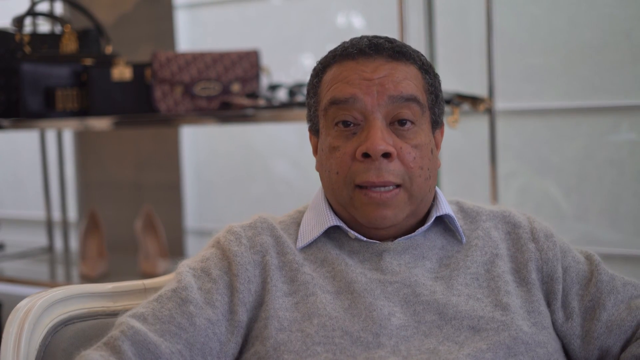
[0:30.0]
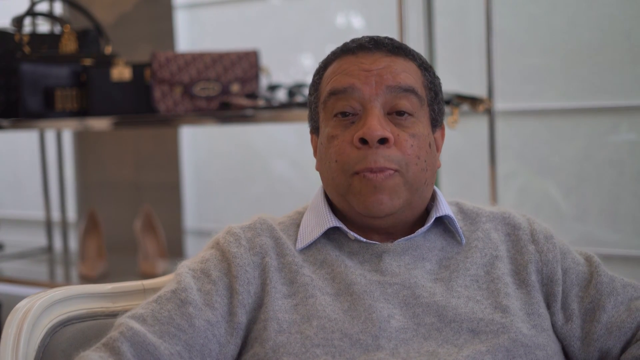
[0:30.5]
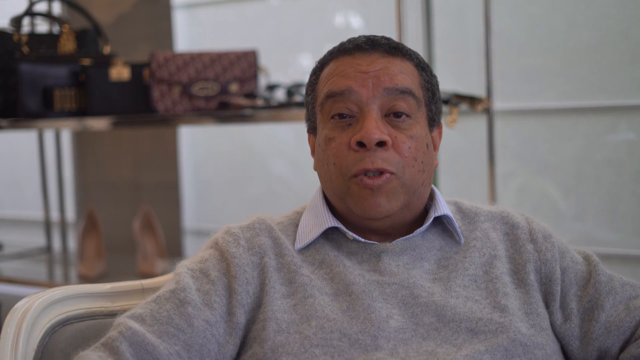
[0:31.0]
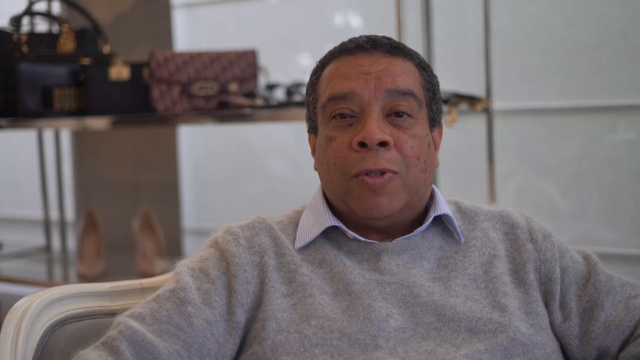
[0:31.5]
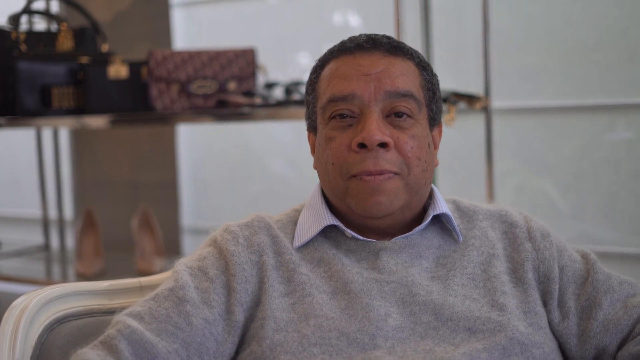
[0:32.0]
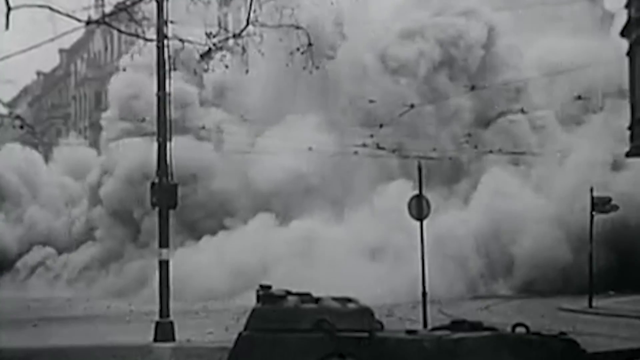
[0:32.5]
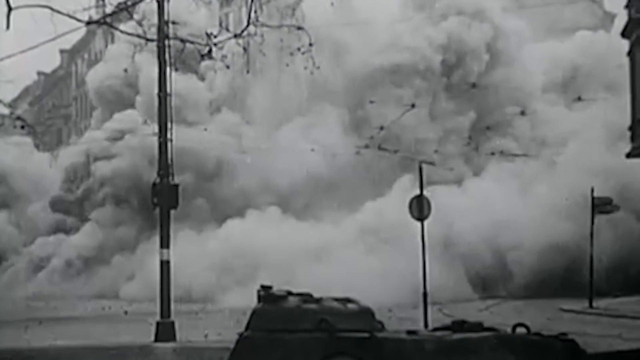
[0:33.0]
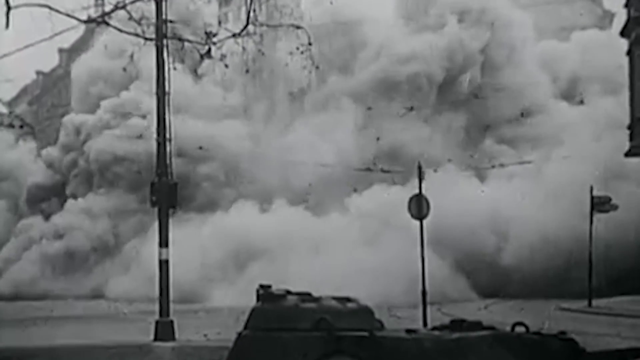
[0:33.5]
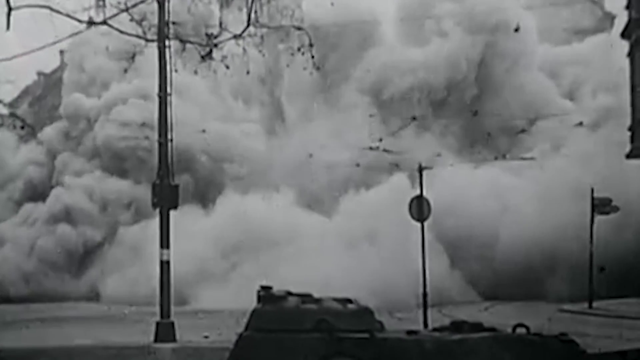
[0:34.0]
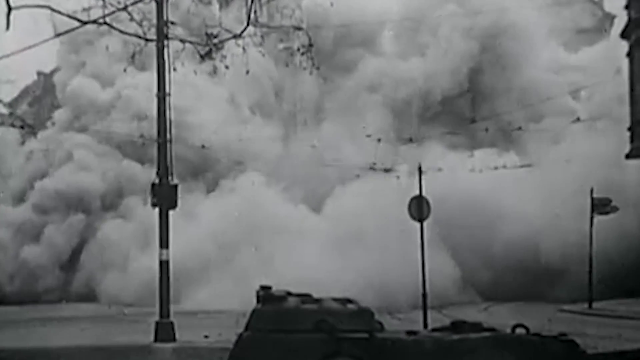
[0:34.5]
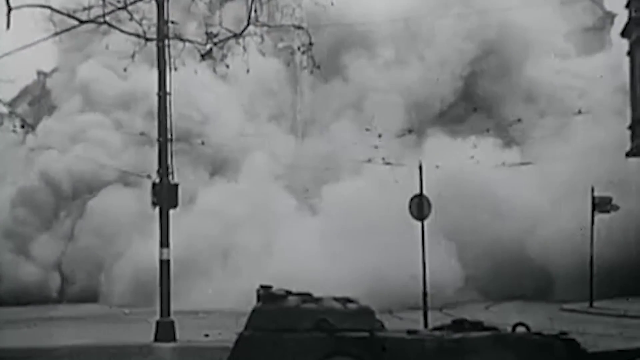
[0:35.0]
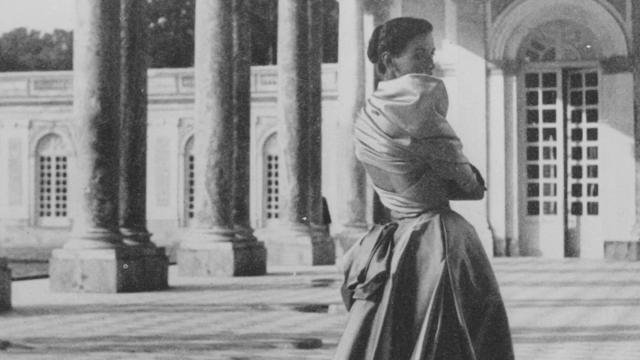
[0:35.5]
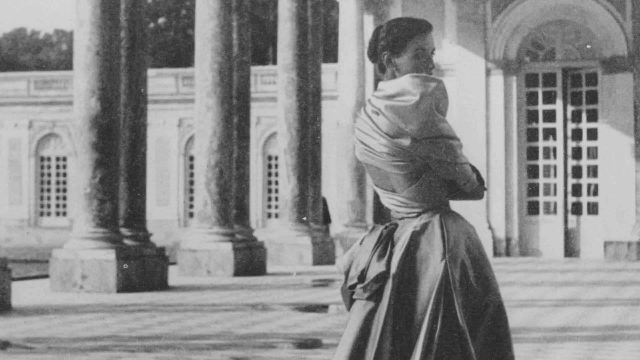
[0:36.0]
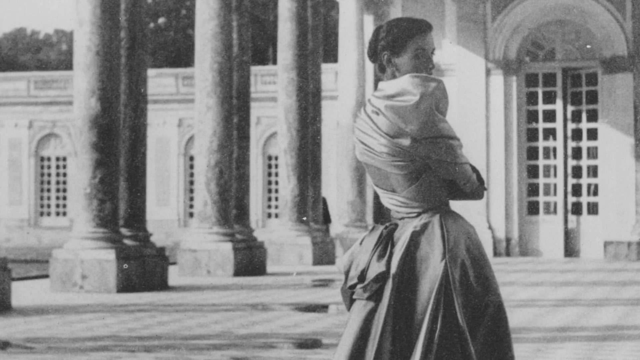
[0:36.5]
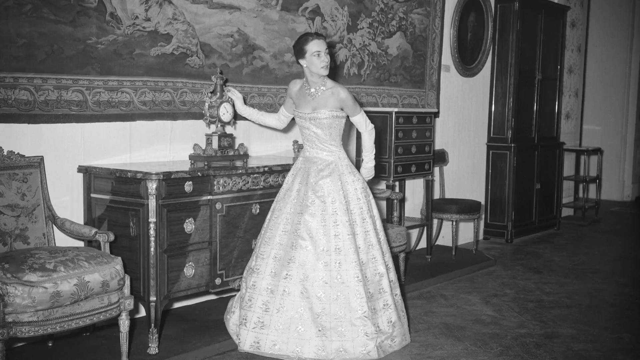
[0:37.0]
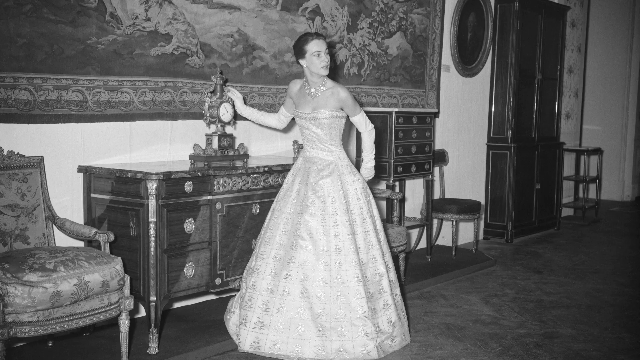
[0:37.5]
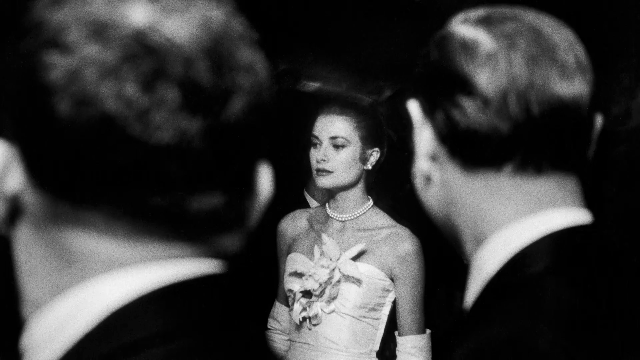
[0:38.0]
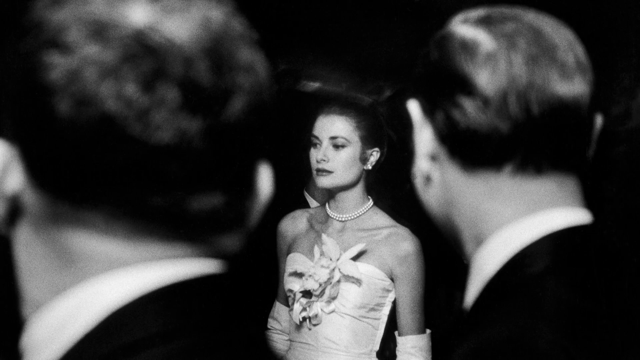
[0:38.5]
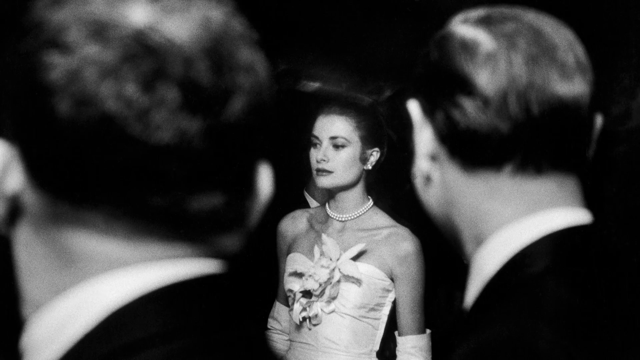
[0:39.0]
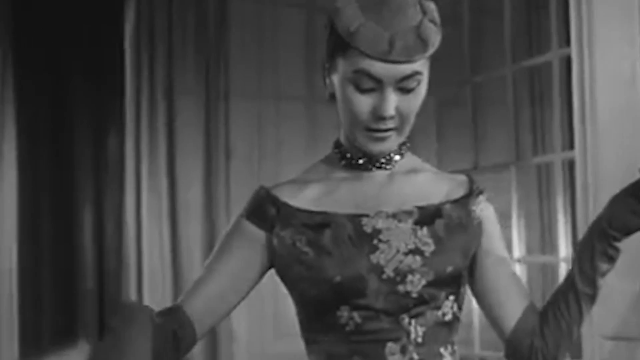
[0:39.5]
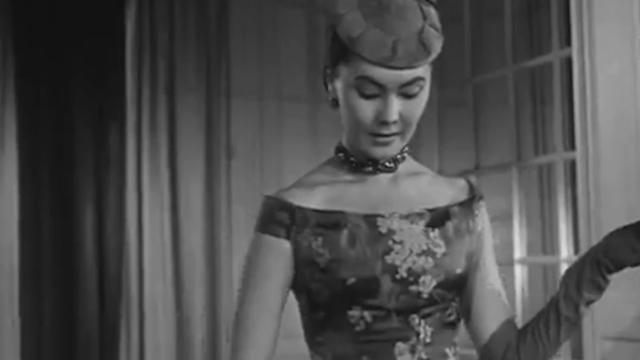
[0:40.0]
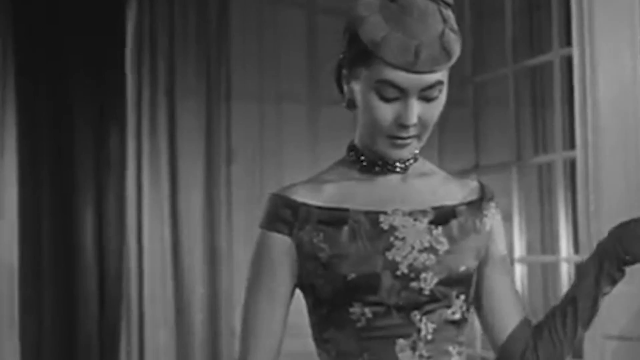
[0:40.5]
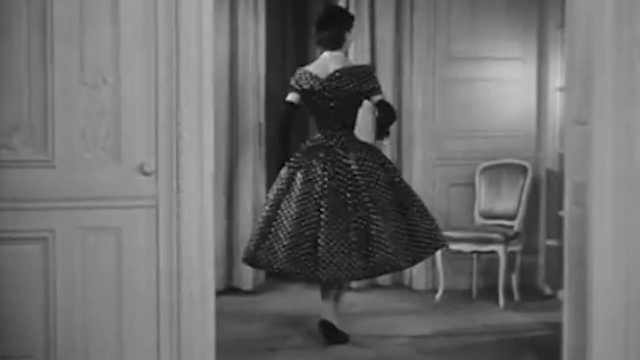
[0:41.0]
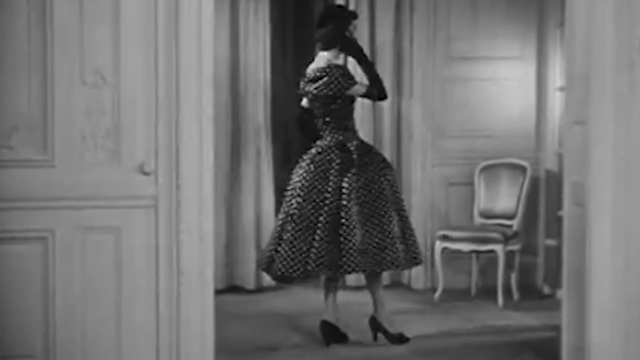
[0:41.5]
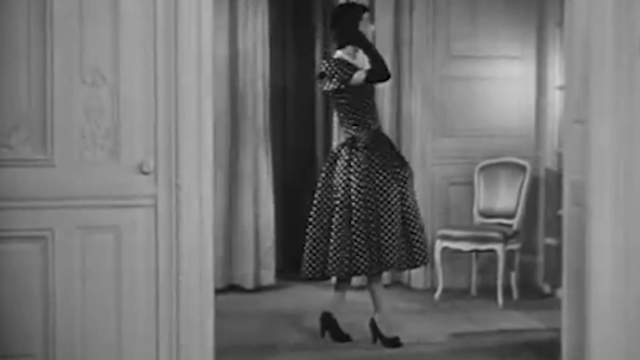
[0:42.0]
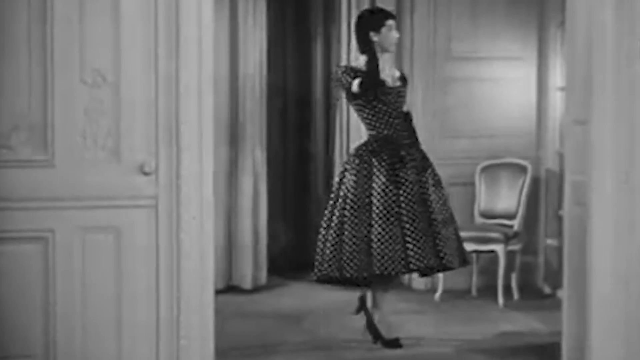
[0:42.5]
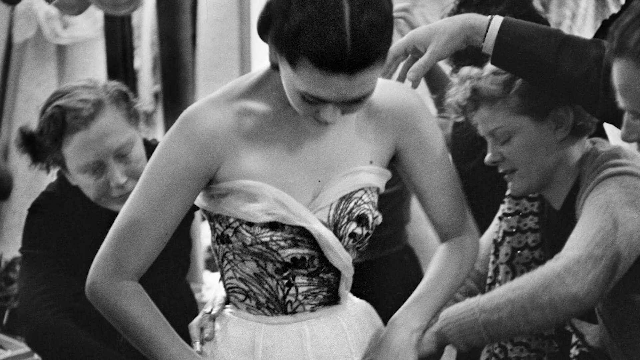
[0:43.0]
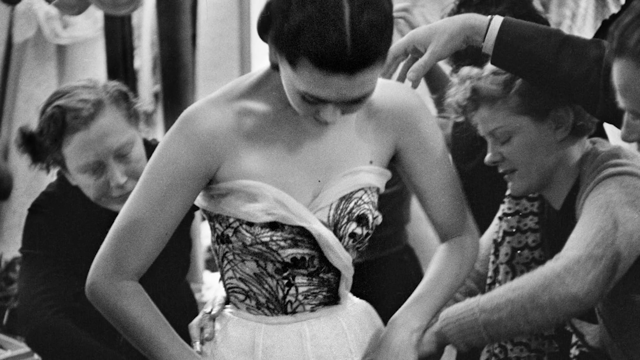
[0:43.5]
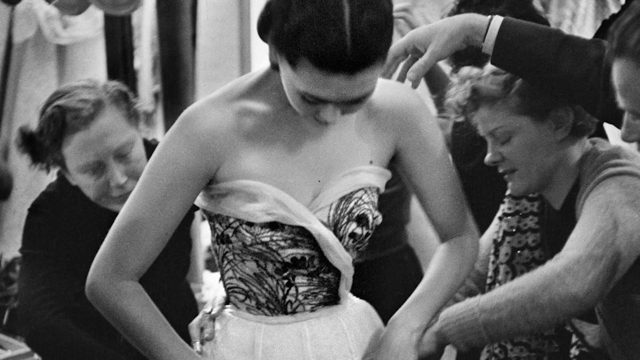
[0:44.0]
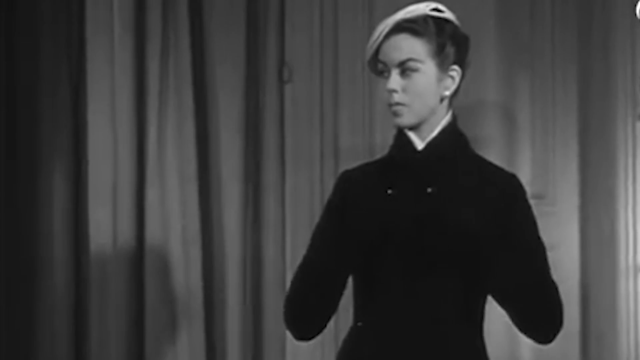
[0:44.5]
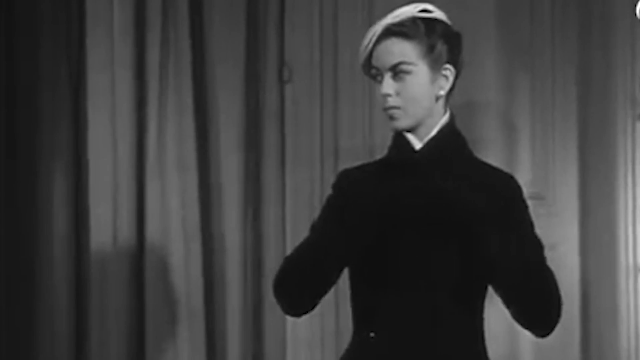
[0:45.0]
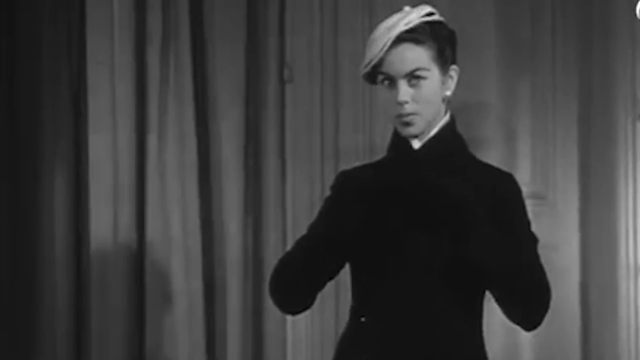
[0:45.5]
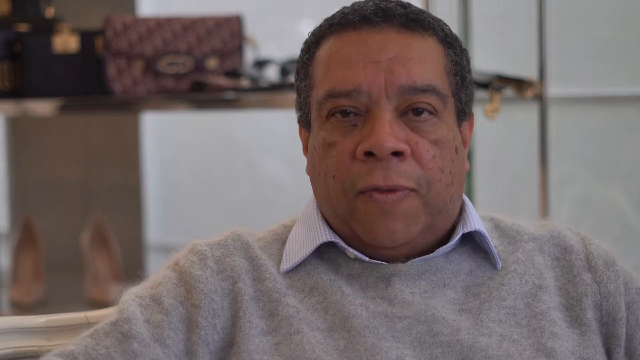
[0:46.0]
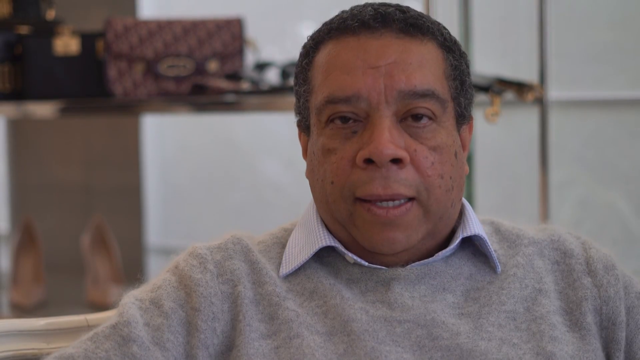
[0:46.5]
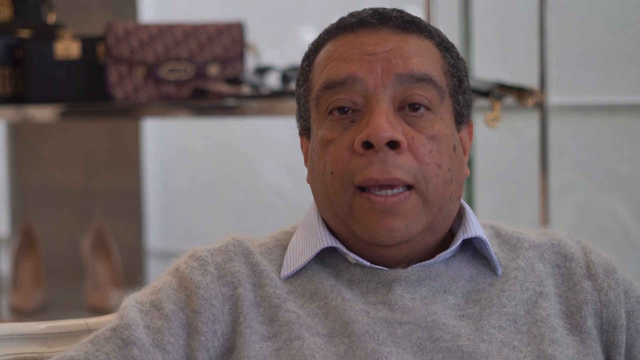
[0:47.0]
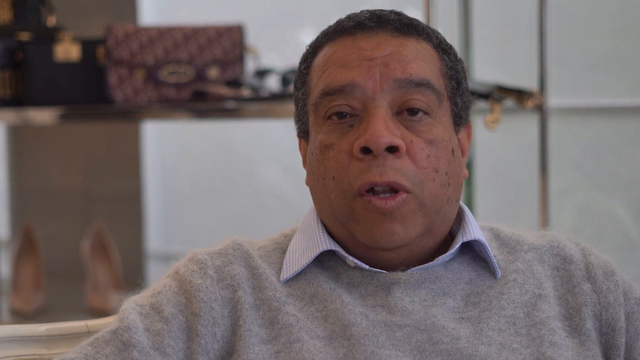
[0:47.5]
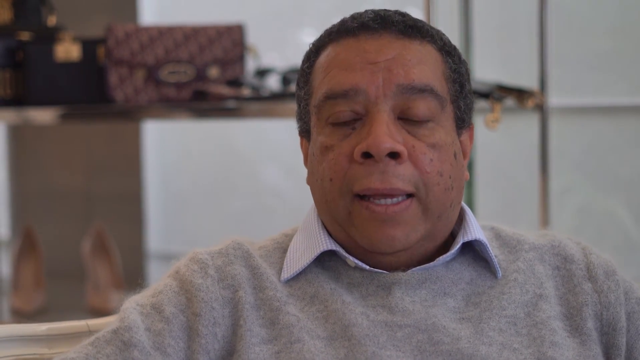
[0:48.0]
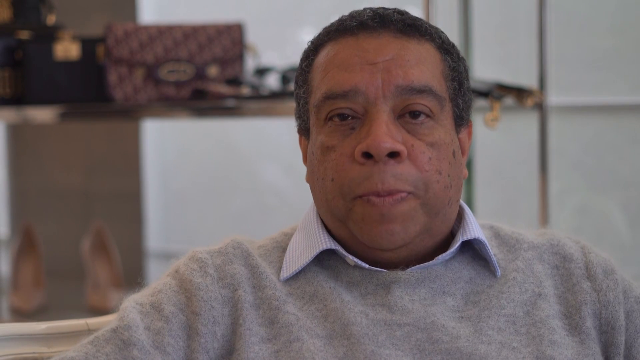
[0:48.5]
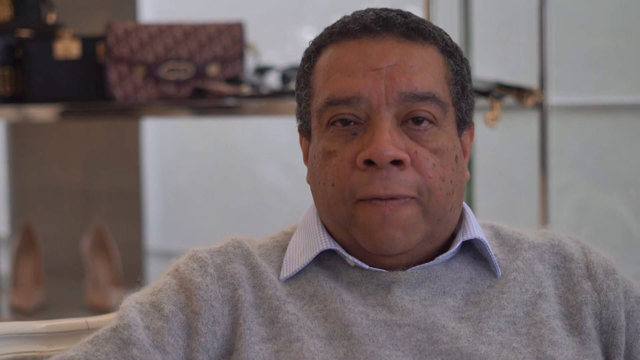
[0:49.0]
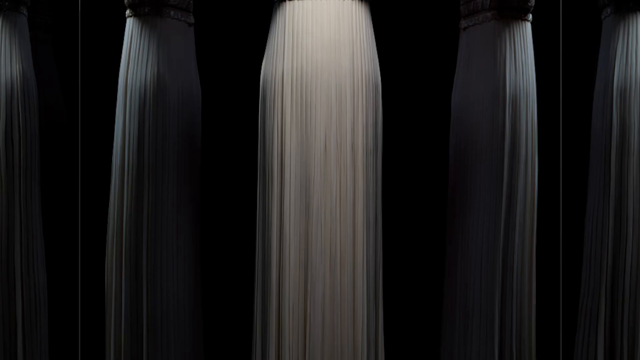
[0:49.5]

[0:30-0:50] A tall man with short hair and dark brown skin is shown. Behind him, in the slightly blurry background, items such as shoes and bags hang on a shelf. An image of a large dust cloud appears, followed by very old black-and-white images referring to the past: a woman wearing a very old-fashioned dress, and a woman in a room that looks like a big castle, wearing very old clothes and apparently a black beret. Then she appears in a strapless dress along with other women, with a male hand near her neck. Someone appears in a black dress with an unidentified item on the head. The man keeps talking as scenes from the past are shown.